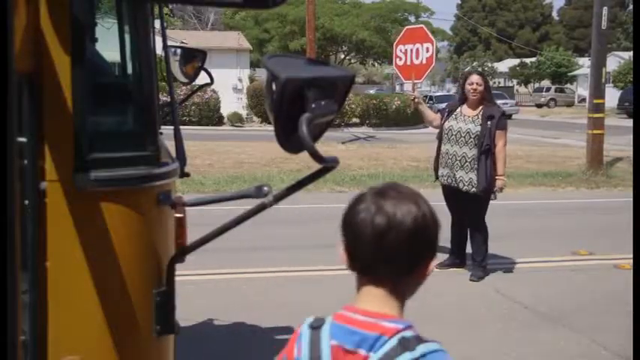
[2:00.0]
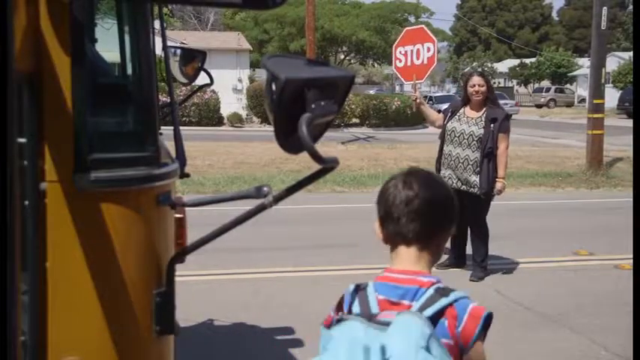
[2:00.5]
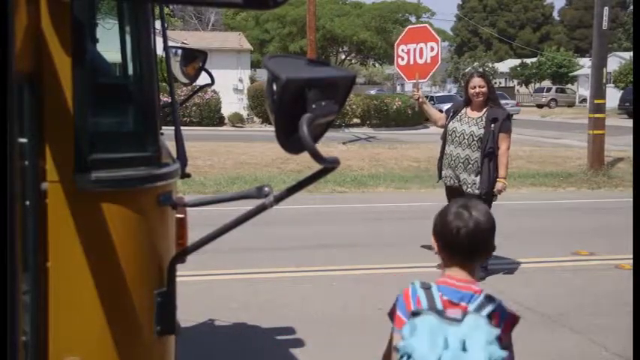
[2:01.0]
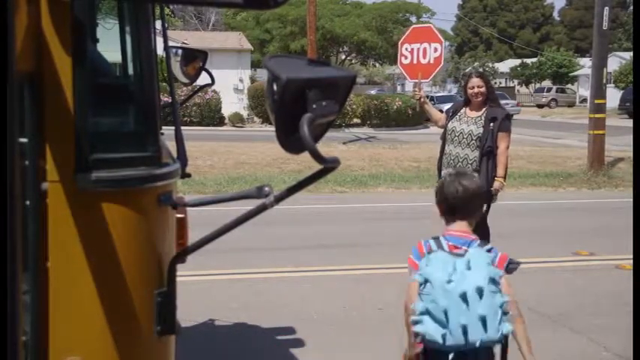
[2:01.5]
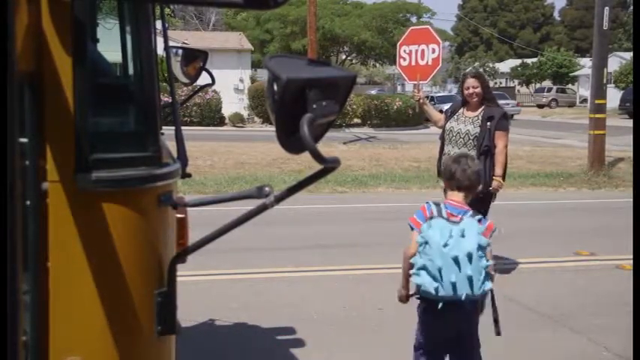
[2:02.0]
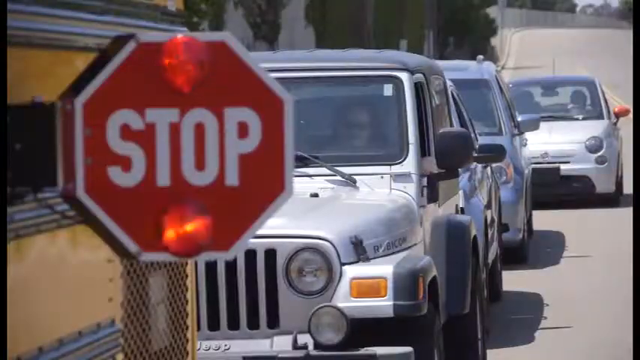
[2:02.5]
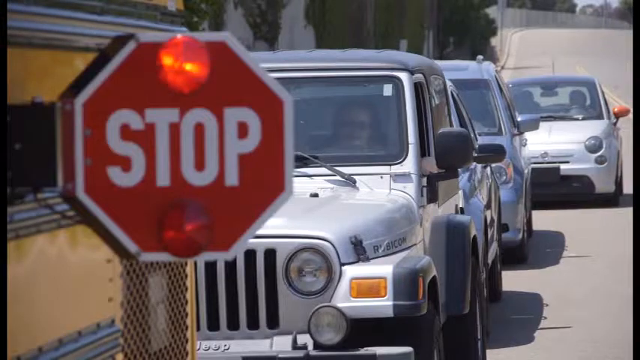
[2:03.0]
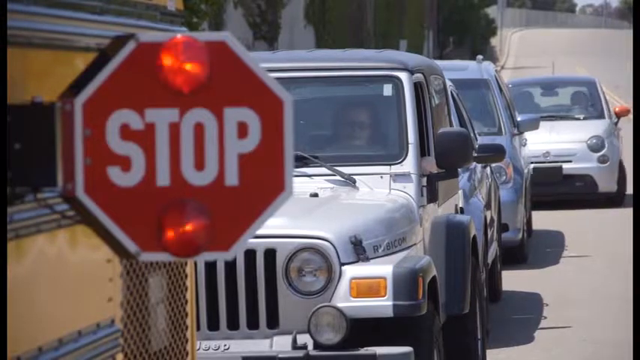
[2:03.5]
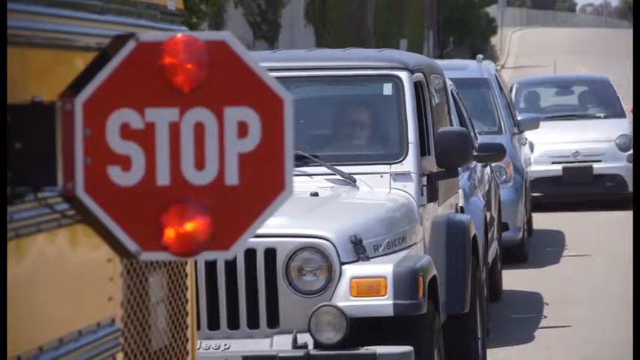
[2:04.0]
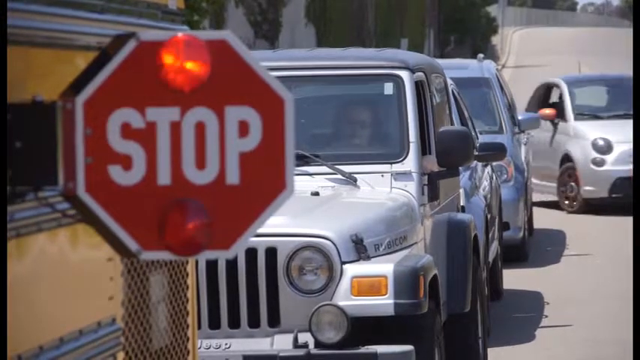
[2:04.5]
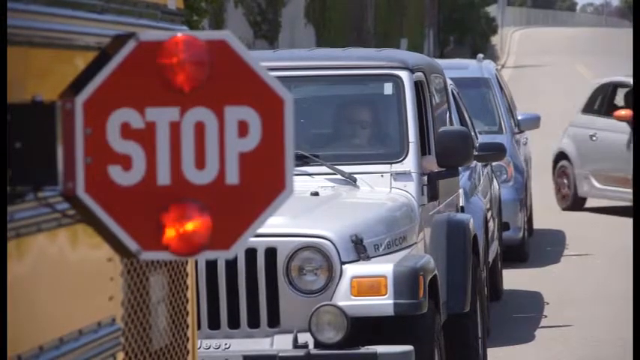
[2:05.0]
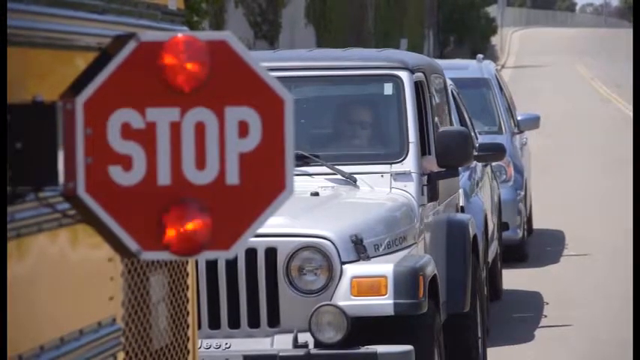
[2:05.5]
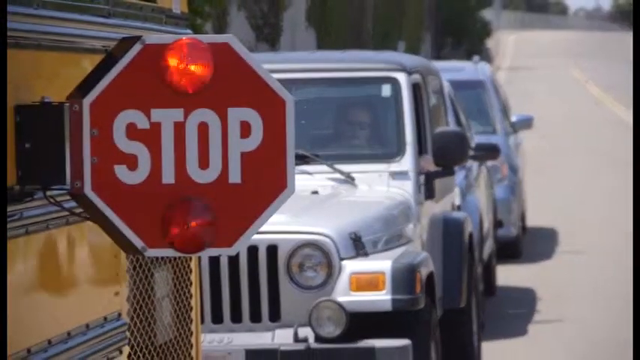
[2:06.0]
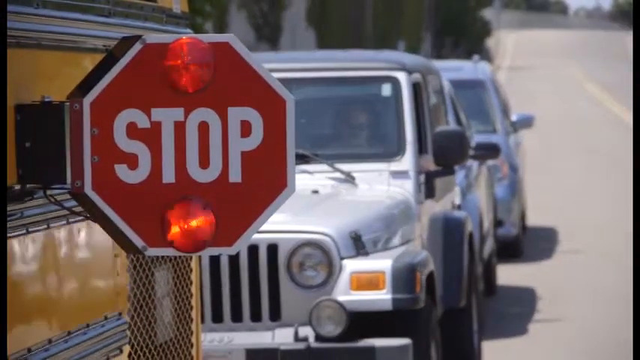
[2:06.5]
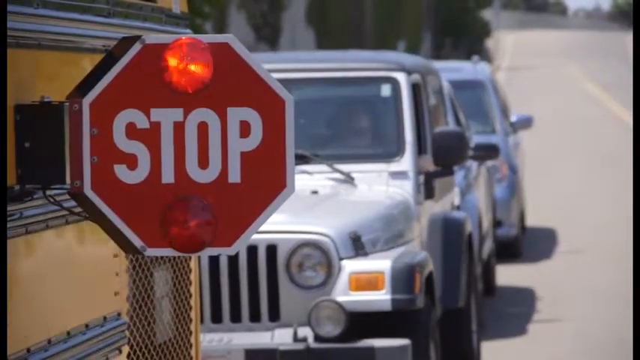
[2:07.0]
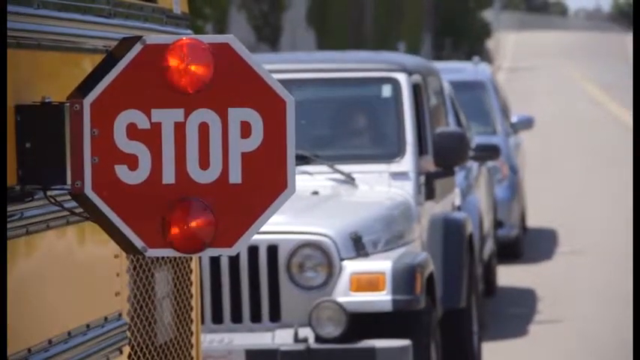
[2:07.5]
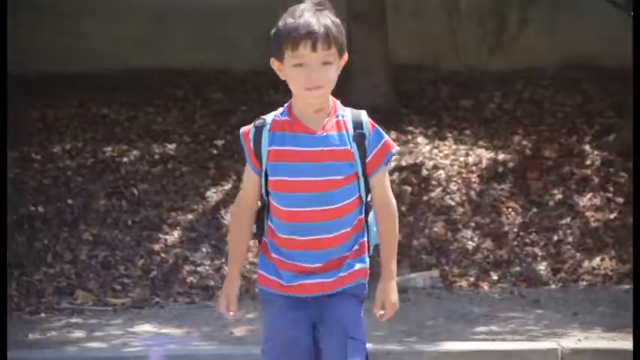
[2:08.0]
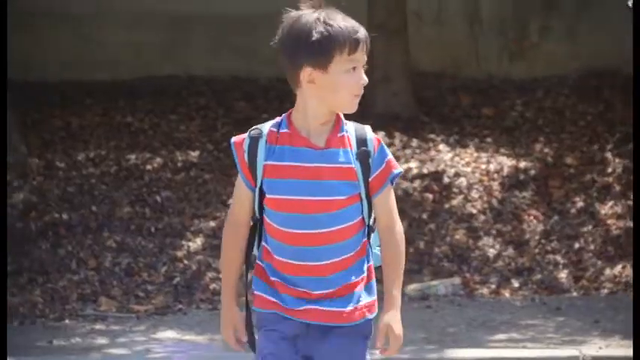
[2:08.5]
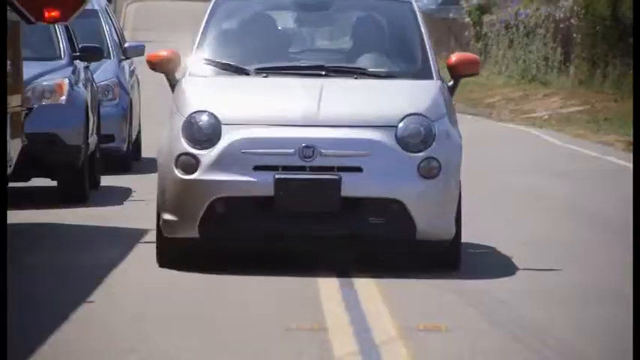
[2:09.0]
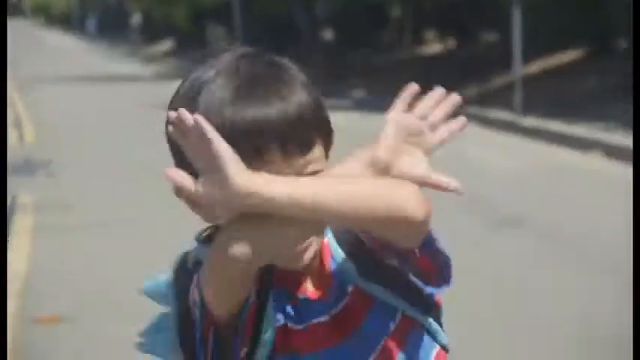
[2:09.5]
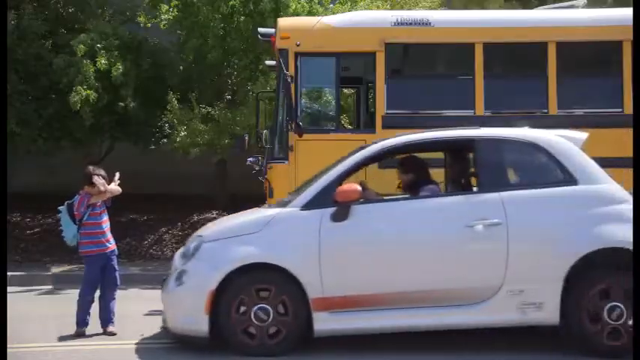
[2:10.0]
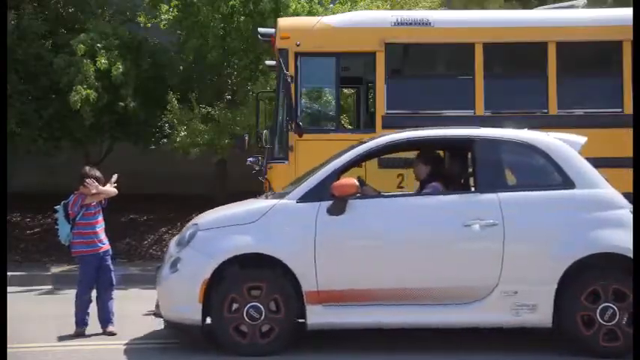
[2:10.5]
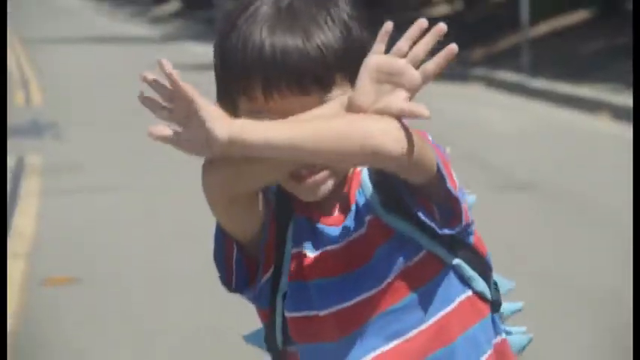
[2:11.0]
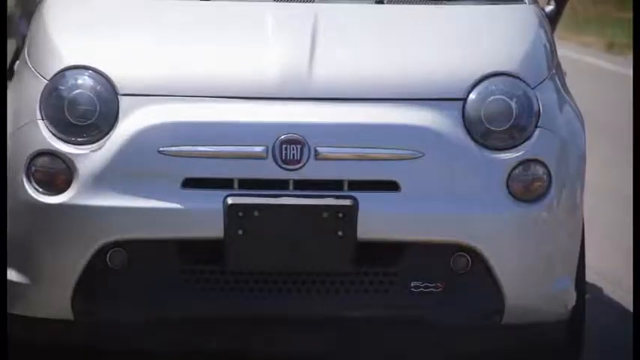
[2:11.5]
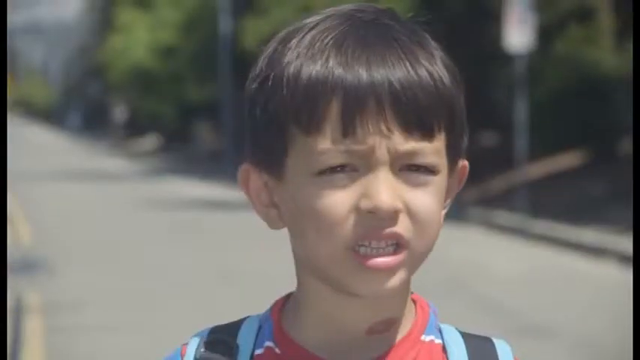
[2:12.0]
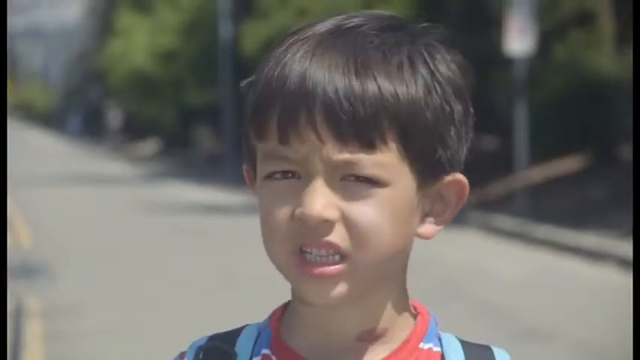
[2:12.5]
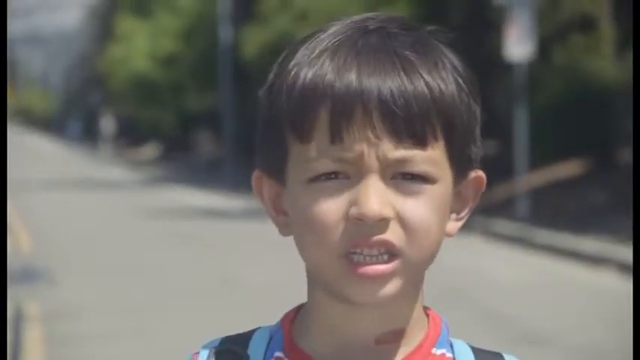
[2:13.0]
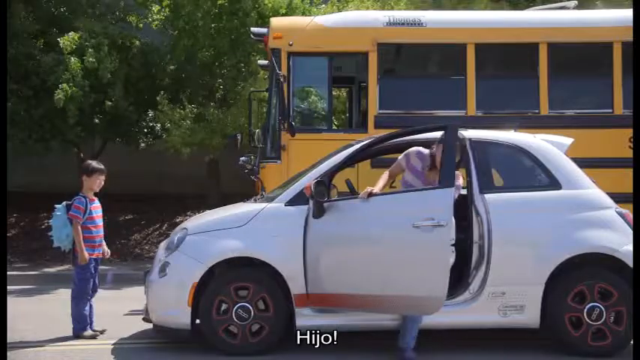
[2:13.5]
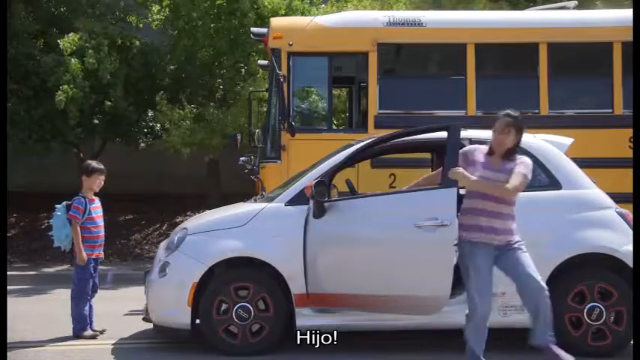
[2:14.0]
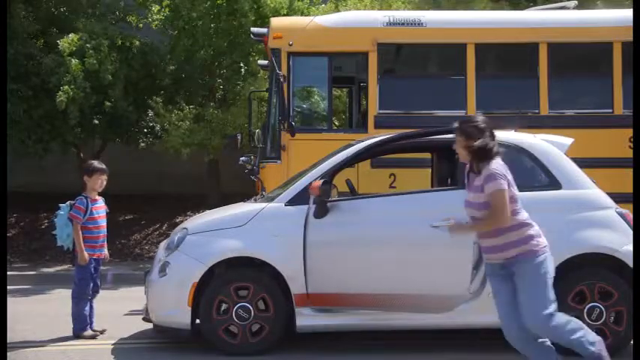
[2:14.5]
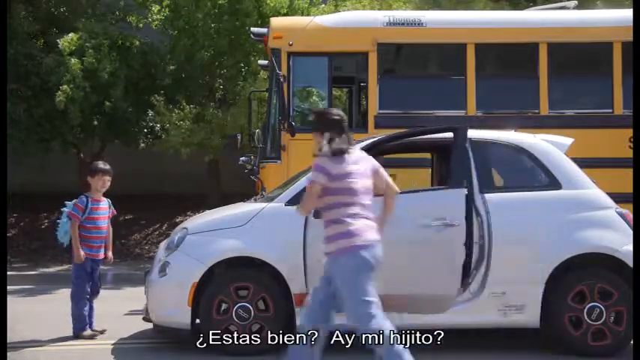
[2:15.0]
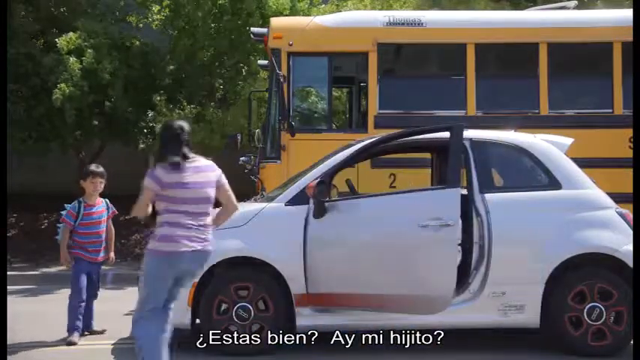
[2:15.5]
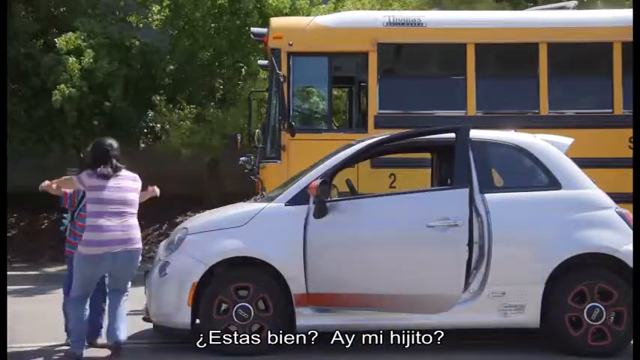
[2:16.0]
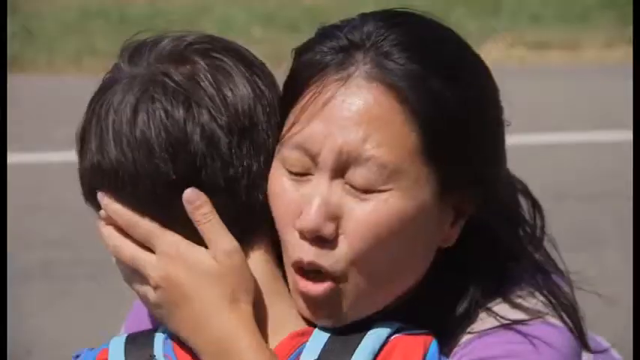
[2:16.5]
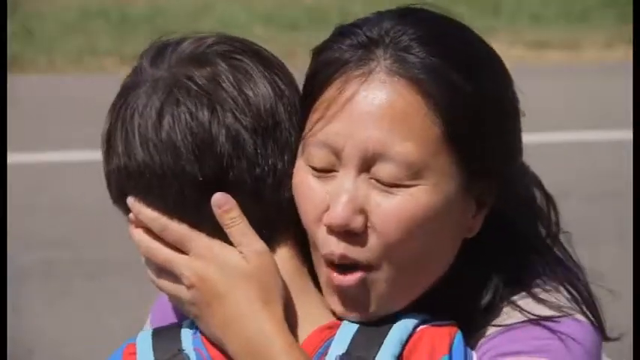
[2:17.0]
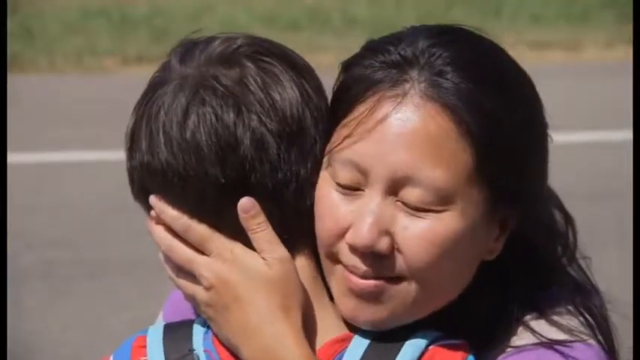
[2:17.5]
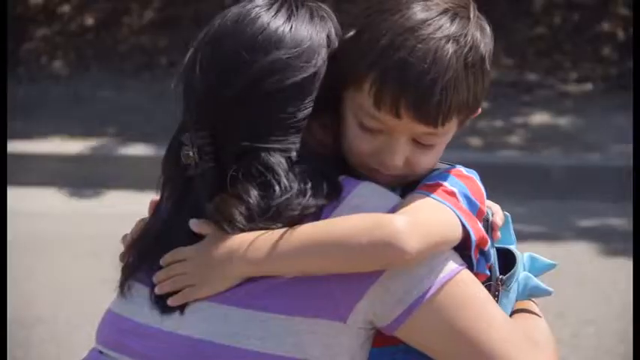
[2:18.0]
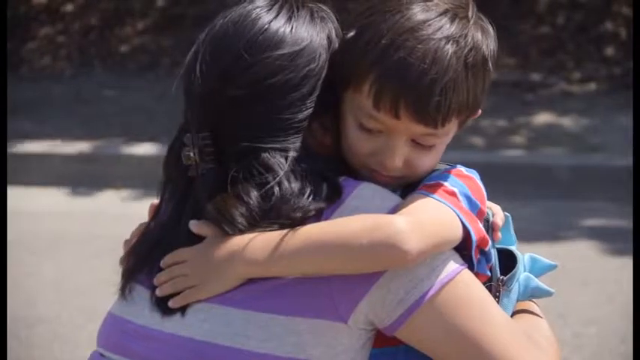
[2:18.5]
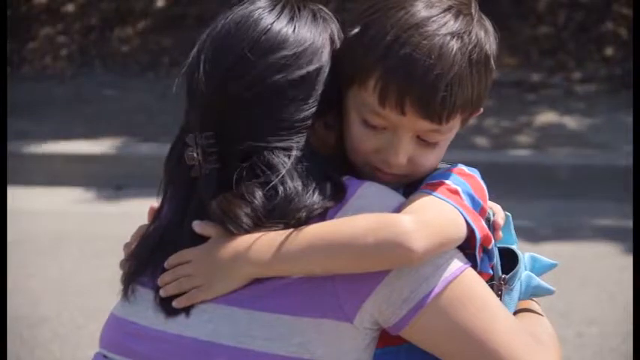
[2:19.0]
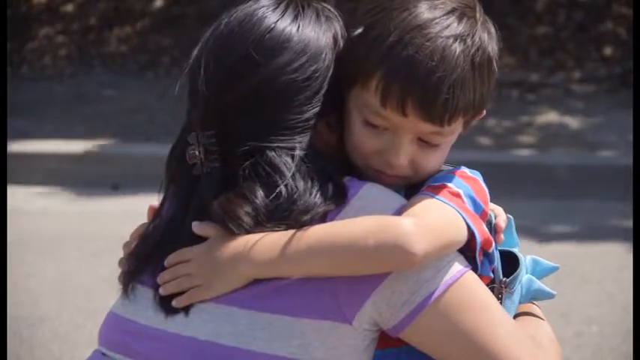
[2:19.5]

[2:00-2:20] A line of cars has stopped at the stop sign. The small Fiat car impatiently overtakes the cars as a little boy is crossing the road. The boy notices the car and stops in the middle of the road with his arms raised and crossed, shaking his head in disapproval. The lady manages to stop the car before she hits the boy. She gets out of the car and realizes it was her son she almost hit. She runs over to him, hugs him and apologizes, and the son hugs her back.